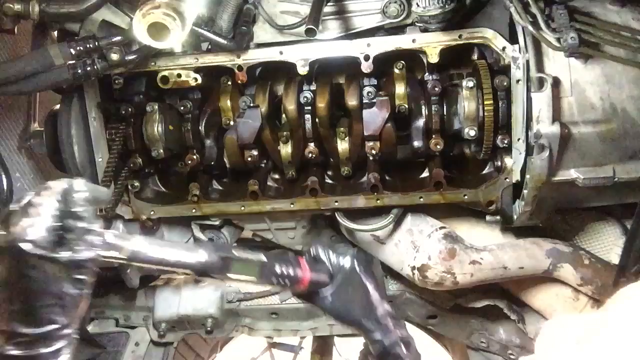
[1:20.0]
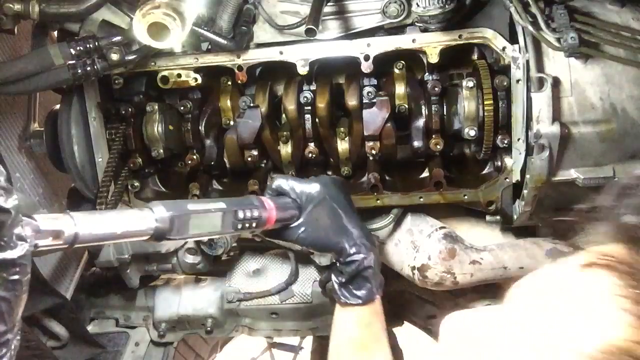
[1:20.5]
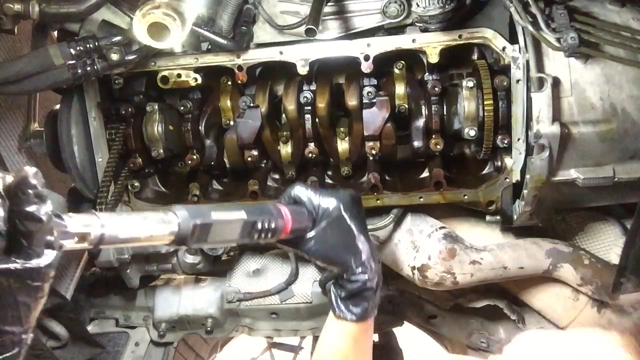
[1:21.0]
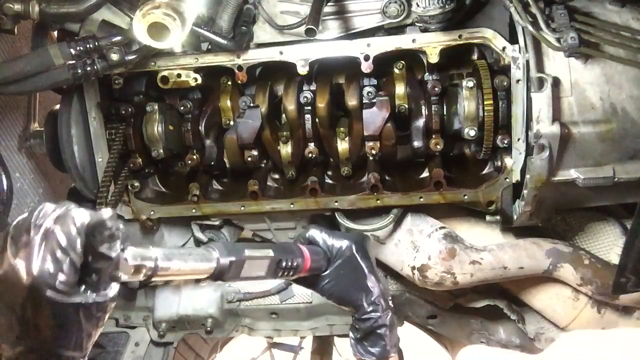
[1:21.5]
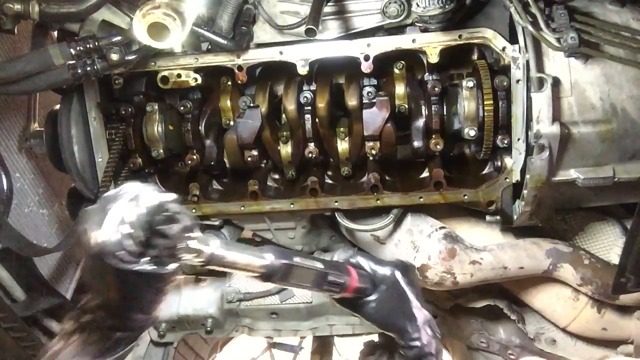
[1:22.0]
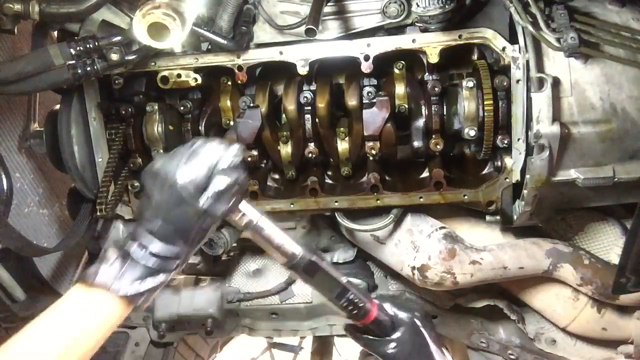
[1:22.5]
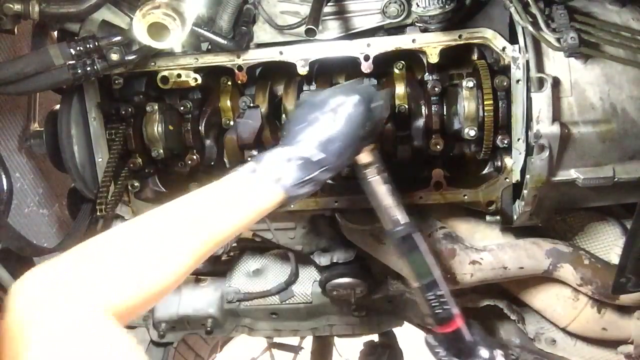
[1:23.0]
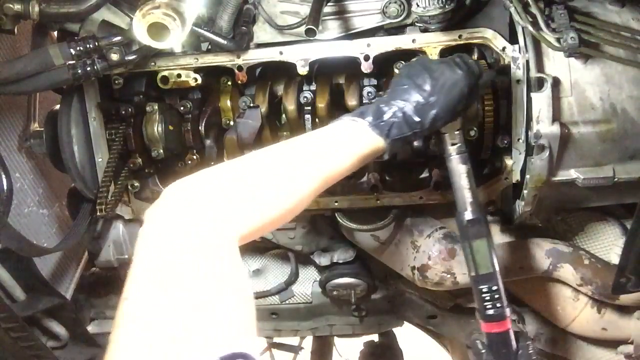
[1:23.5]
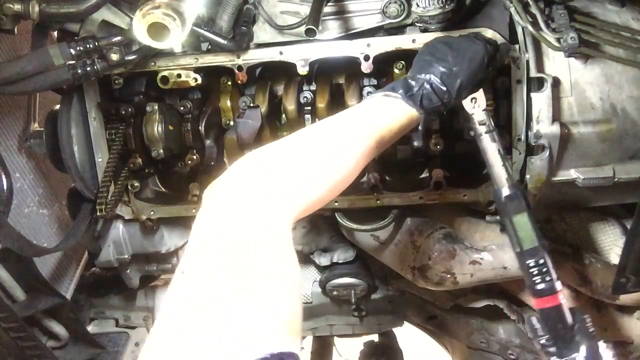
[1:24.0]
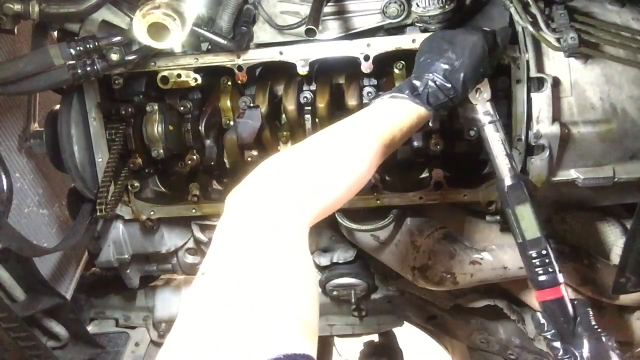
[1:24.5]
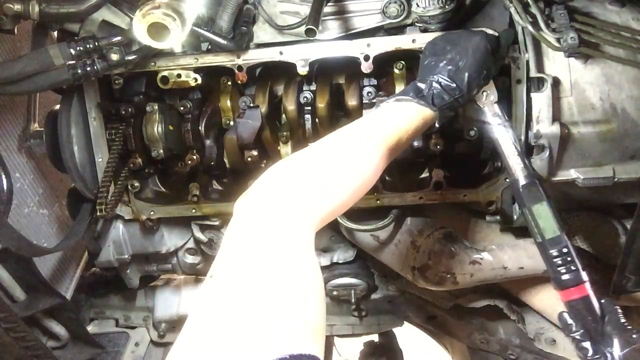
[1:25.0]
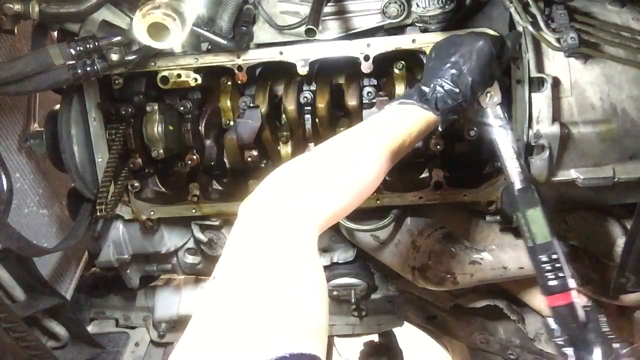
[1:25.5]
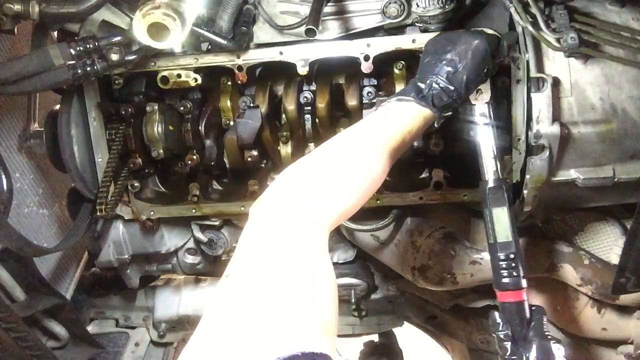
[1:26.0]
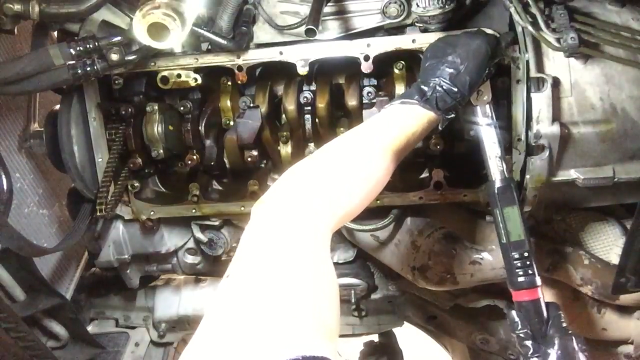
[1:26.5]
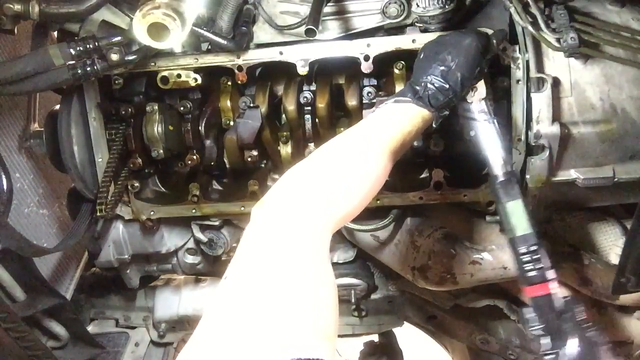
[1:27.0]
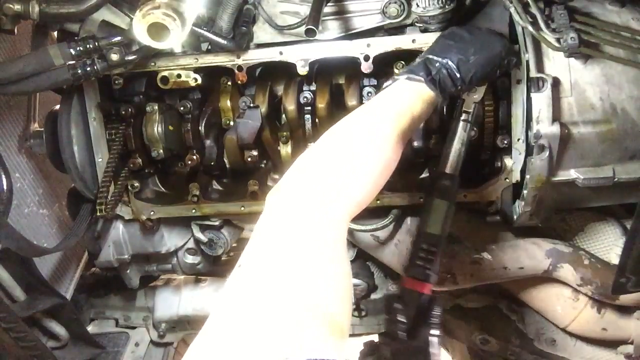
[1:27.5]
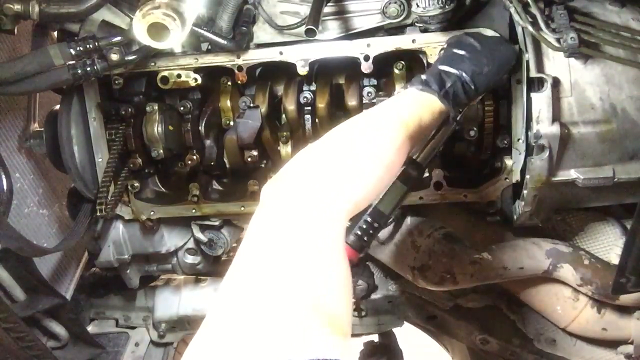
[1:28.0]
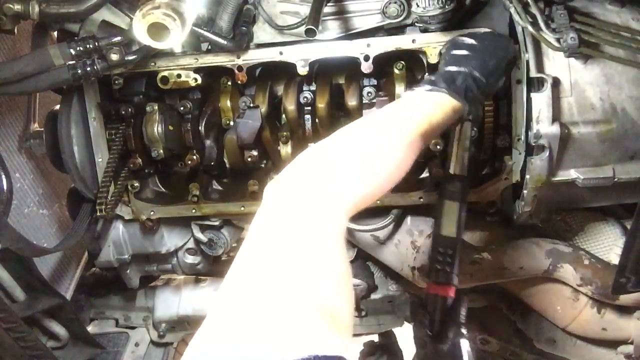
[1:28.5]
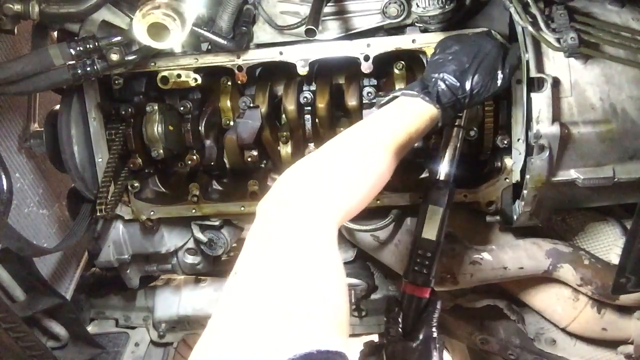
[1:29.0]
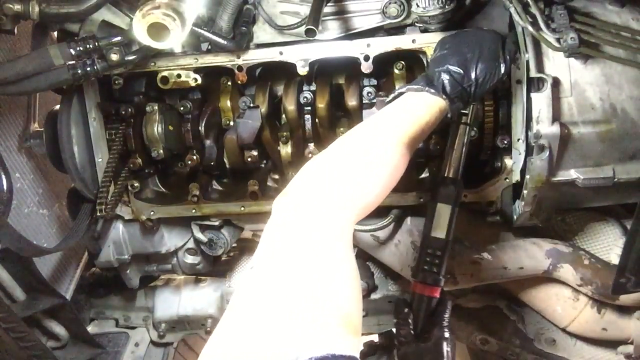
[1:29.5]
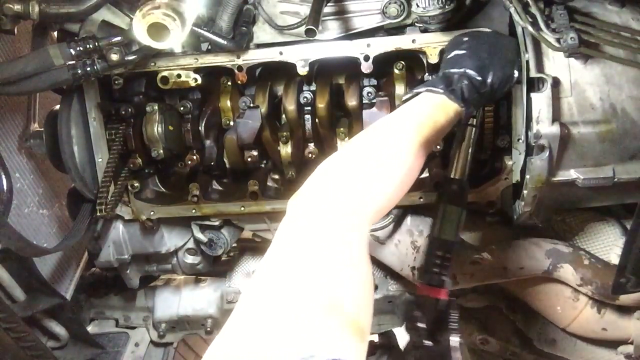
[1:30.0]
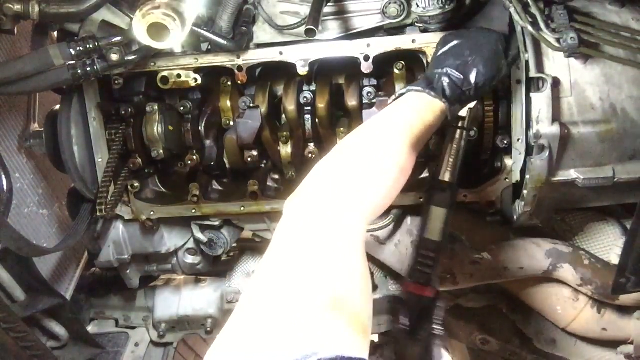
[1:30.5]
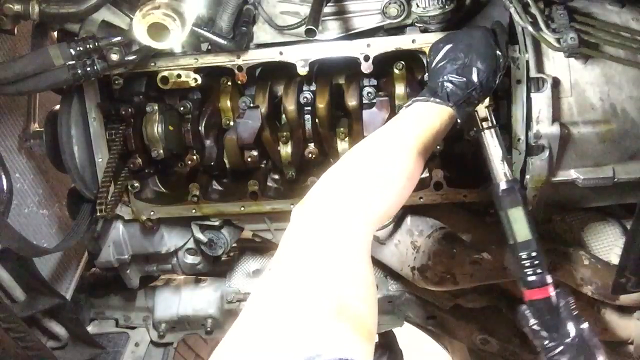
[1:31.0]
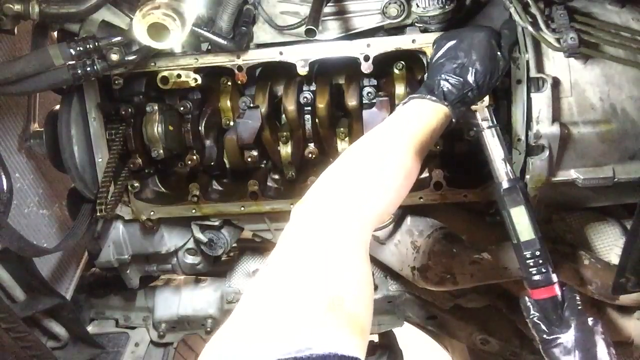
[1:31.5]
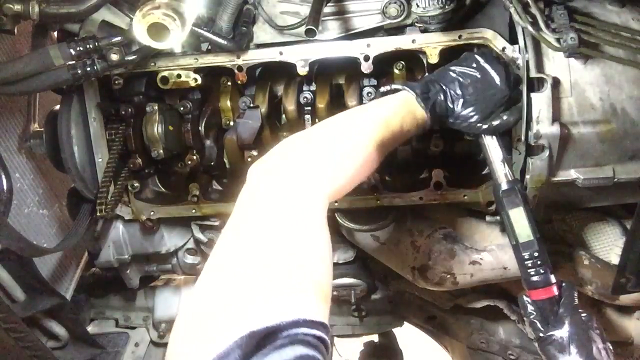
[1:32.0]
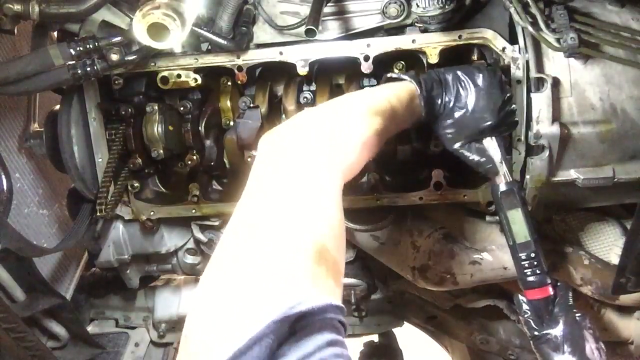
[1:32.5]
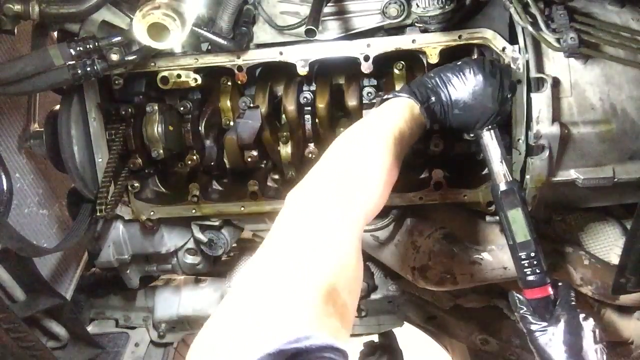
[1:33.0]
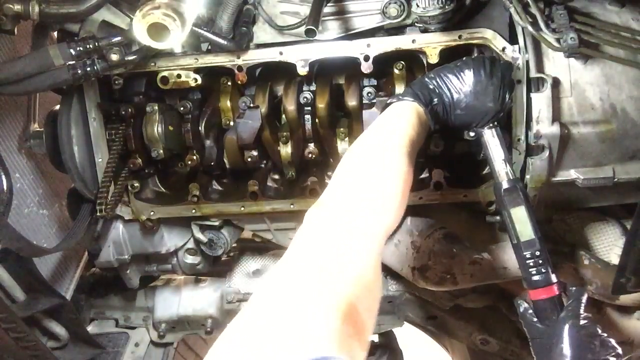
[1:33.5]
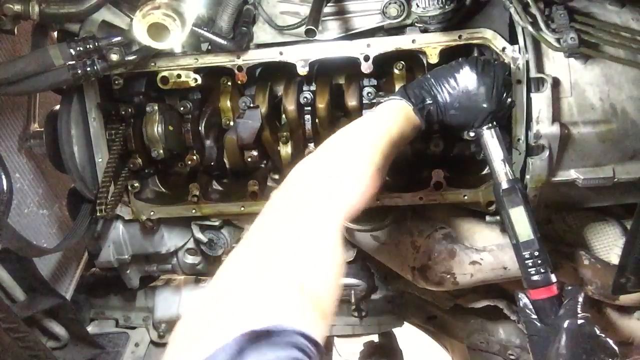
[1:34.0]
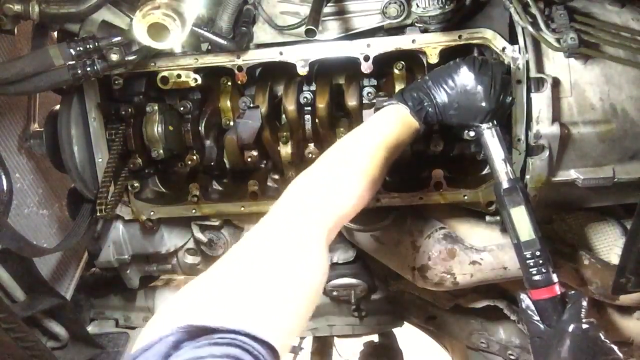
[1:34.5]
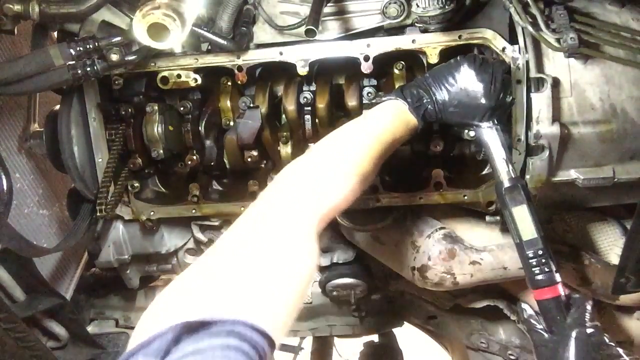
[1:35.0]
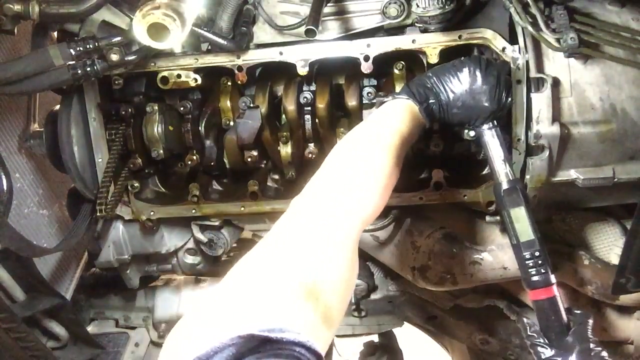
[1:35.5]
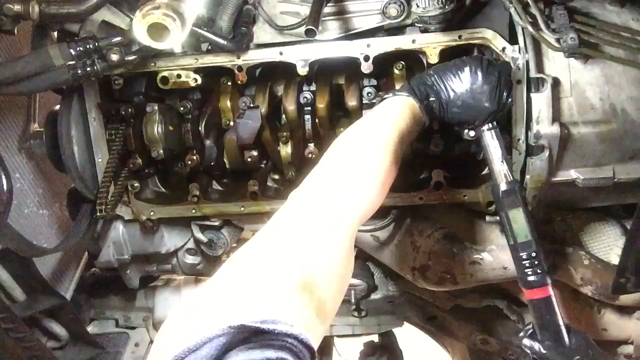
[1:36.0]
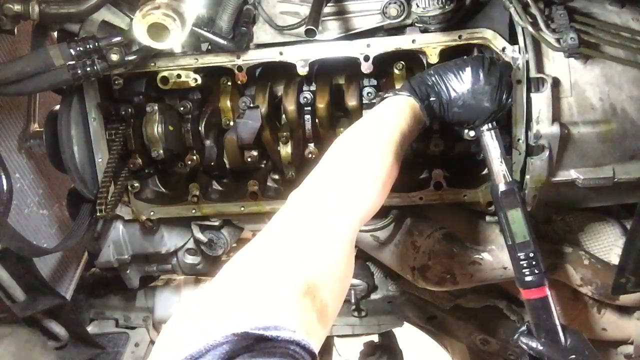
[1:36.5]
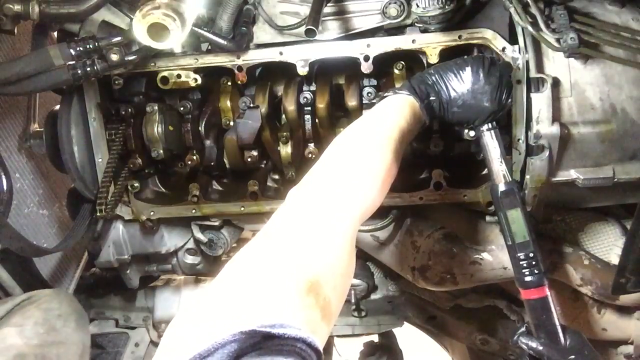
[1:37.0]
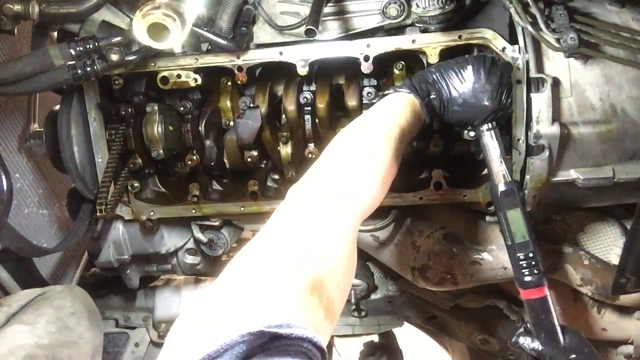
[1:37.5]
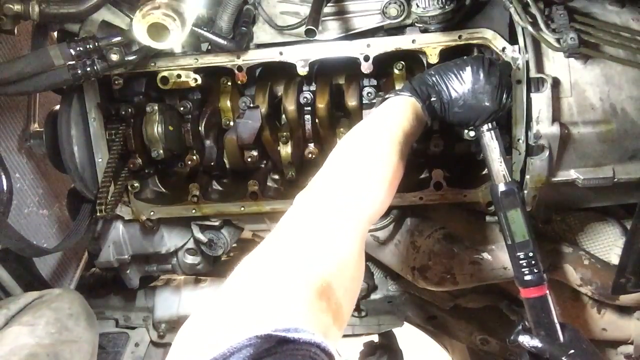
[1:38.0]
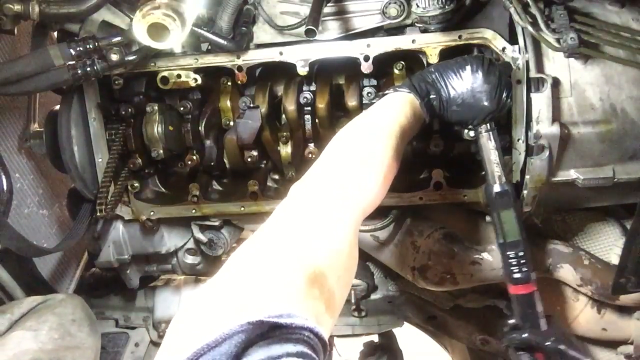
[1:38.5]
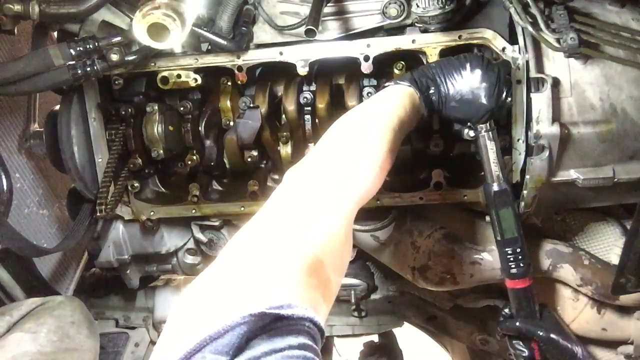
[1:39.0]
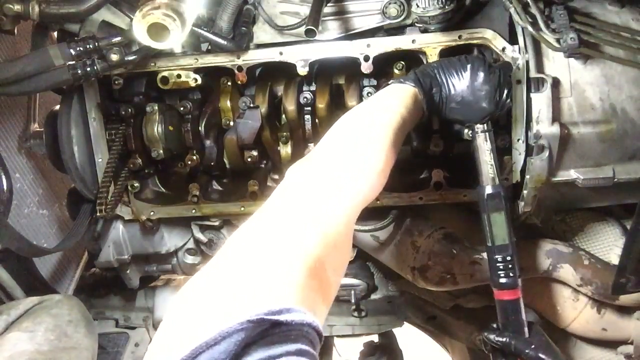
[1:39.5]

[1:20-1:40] The person grasps the device in both hands, the right hand on the right end and the left hand on the left end. They bring it over the engine, apparently to attach it in a similar spot, possibly a little higher up this time. They forcefully attach it onto a piece of metal and appear to be tightening something again, rotating clockwise. The reading on the display cannot be seen because a bright light is reflecting off the whole scene, but they appear to be reattaching the device to the engine, trying to fasten it securely and rotate it to get some kind of reading. The device also has a red ring below its six buttons.